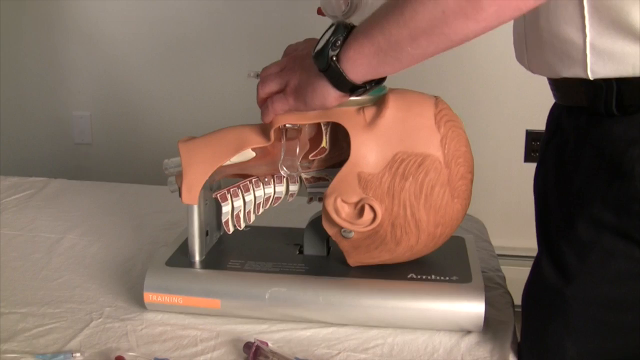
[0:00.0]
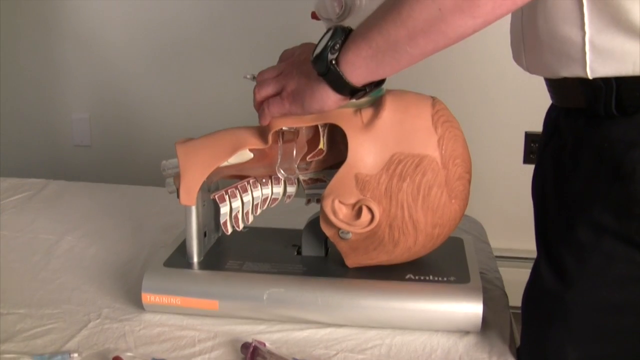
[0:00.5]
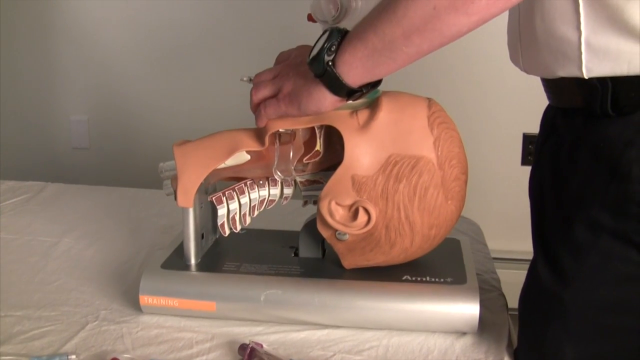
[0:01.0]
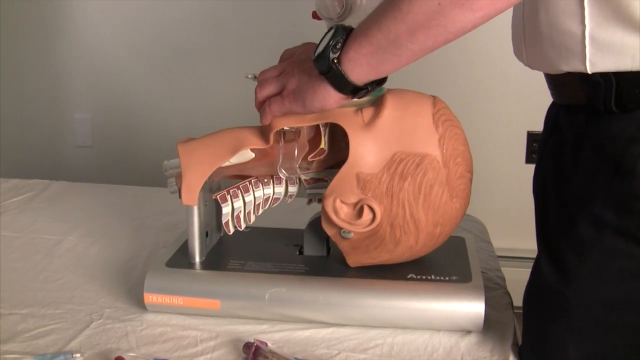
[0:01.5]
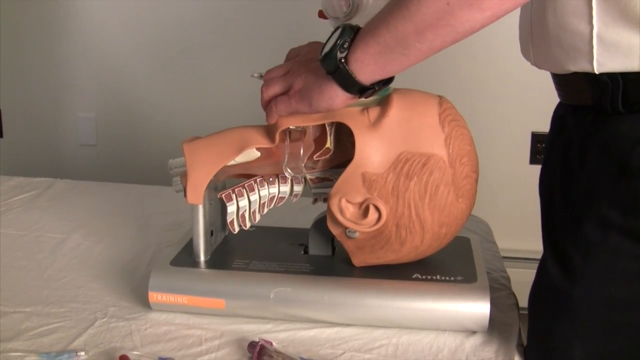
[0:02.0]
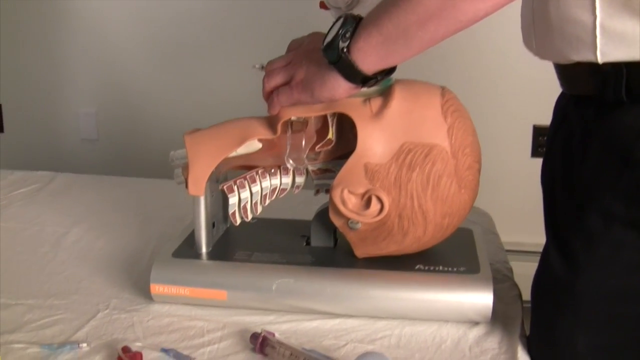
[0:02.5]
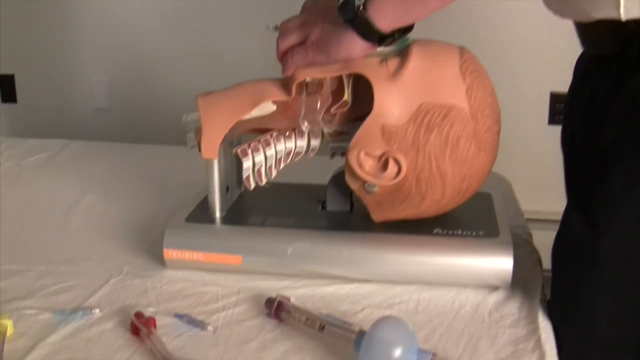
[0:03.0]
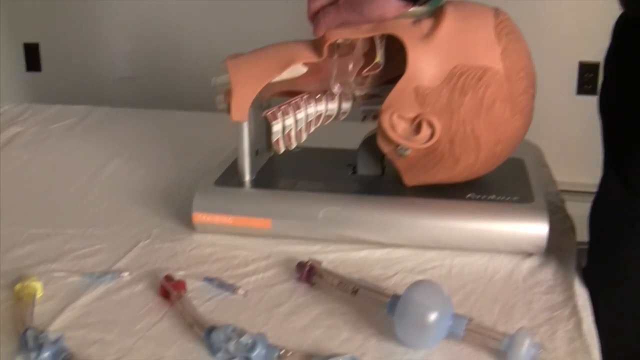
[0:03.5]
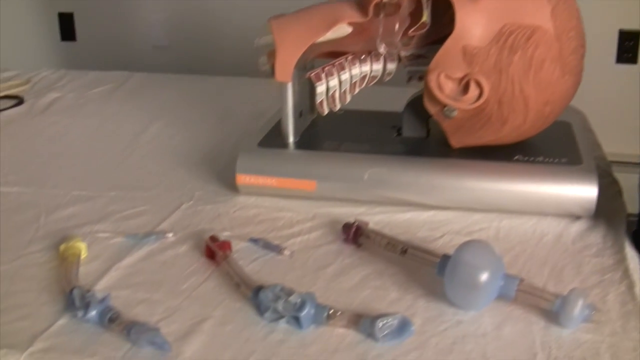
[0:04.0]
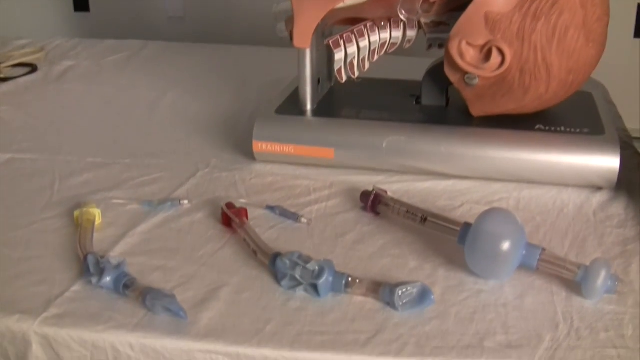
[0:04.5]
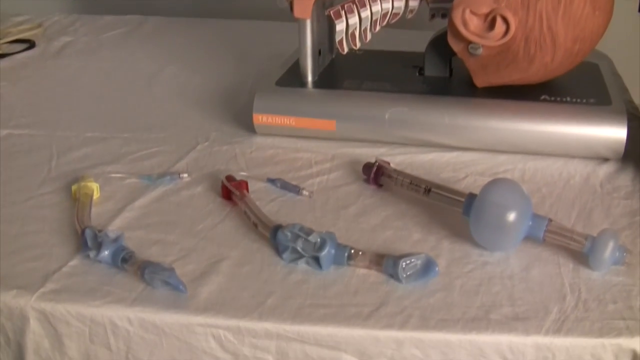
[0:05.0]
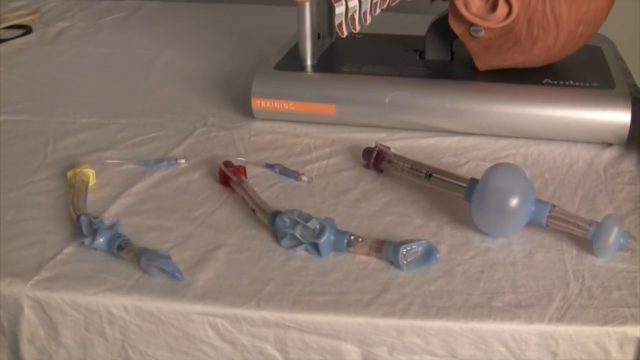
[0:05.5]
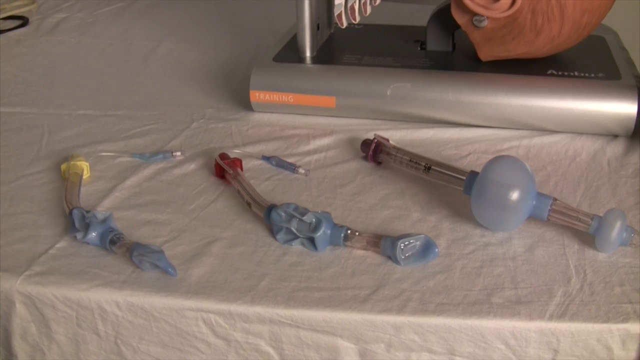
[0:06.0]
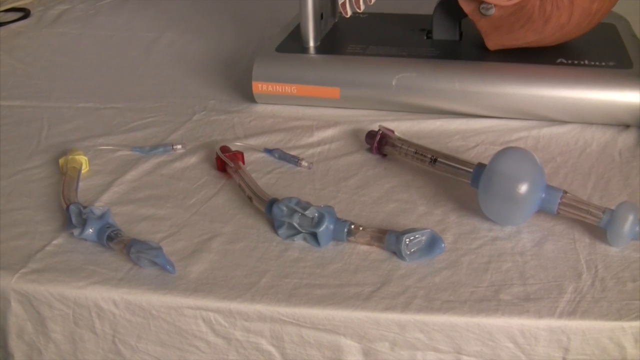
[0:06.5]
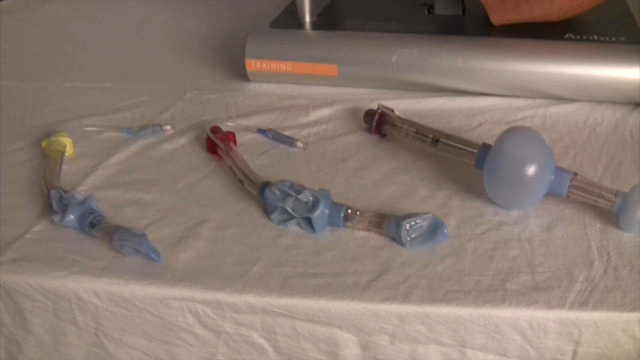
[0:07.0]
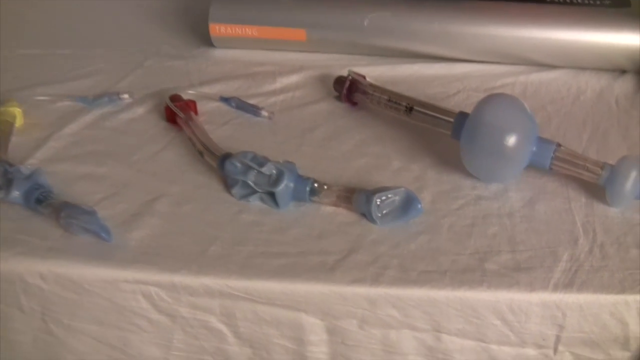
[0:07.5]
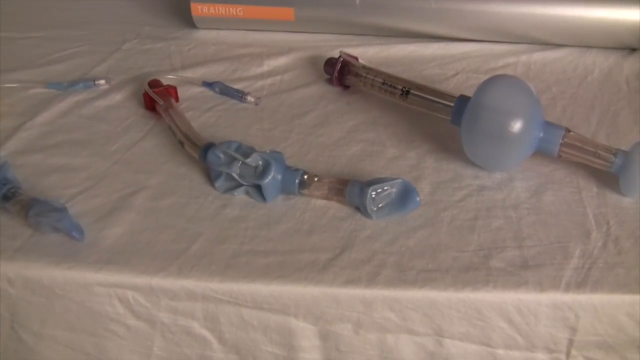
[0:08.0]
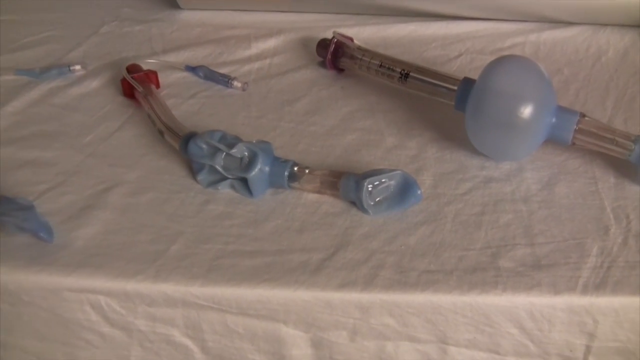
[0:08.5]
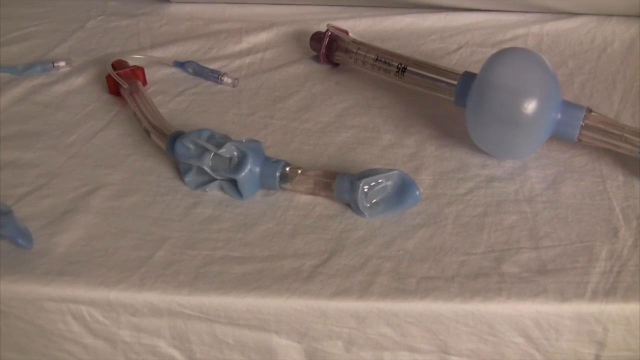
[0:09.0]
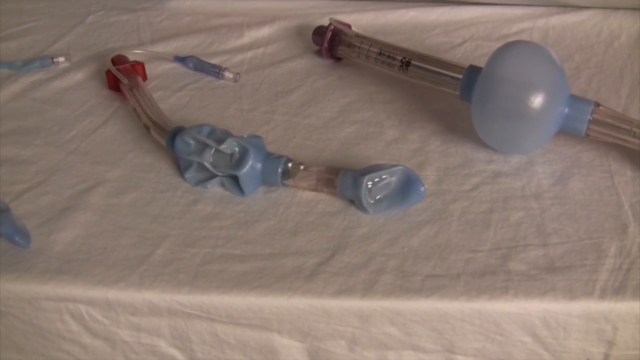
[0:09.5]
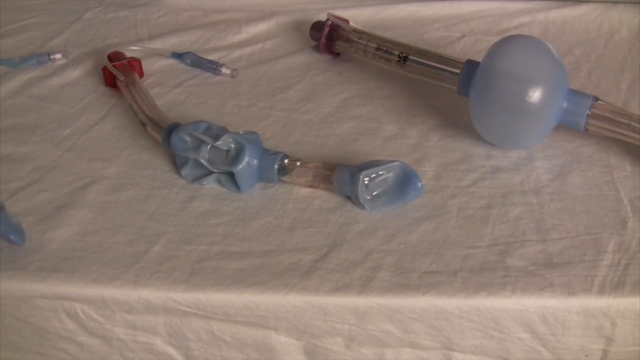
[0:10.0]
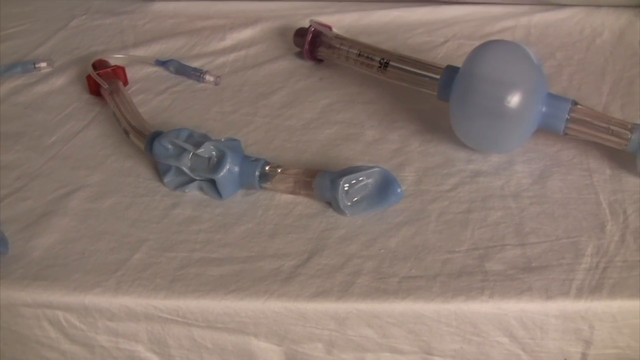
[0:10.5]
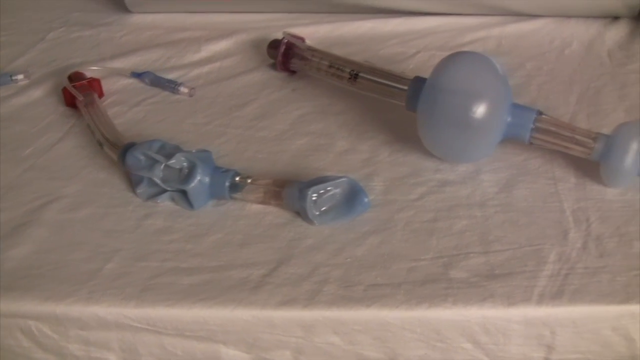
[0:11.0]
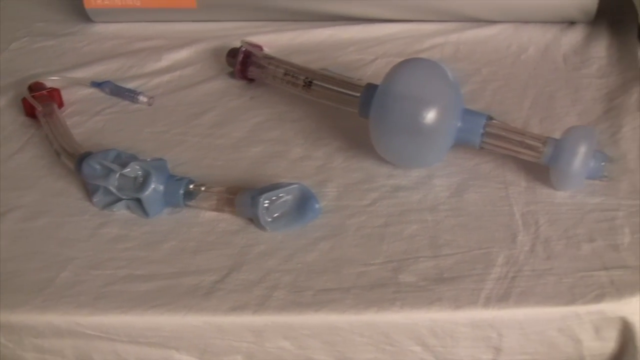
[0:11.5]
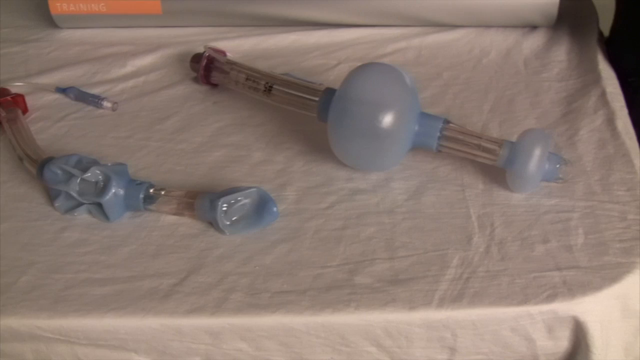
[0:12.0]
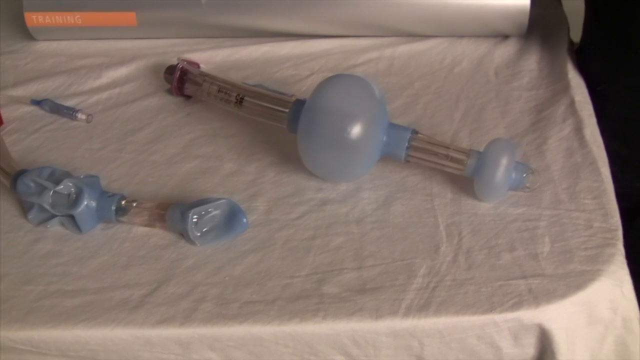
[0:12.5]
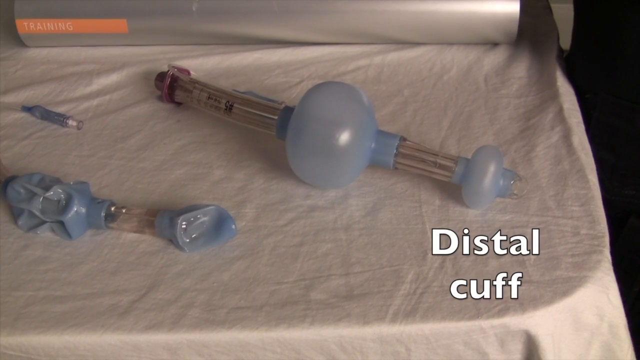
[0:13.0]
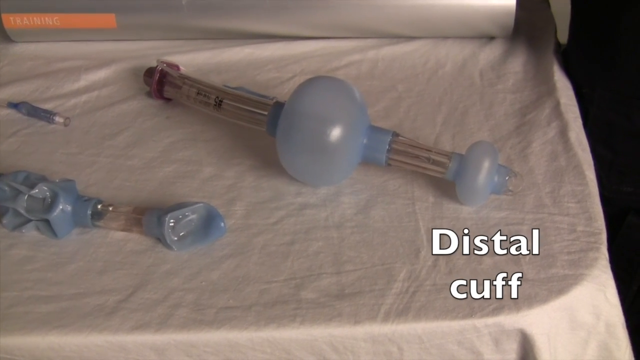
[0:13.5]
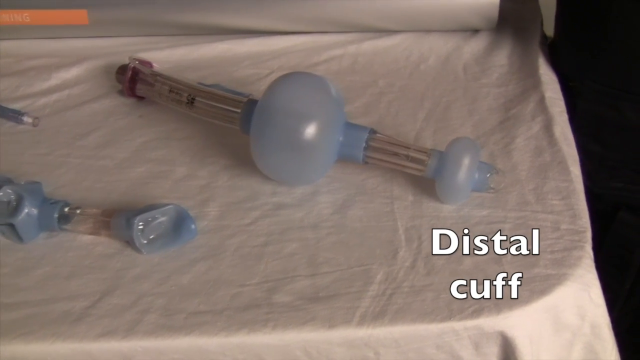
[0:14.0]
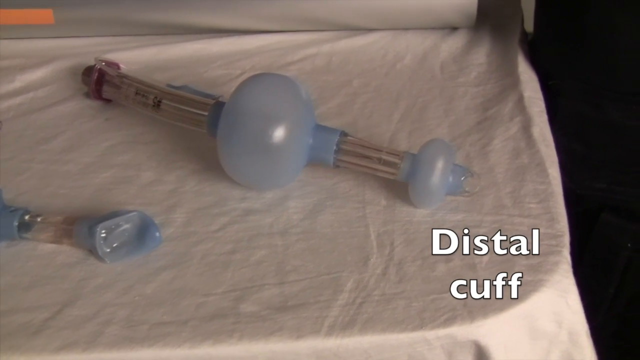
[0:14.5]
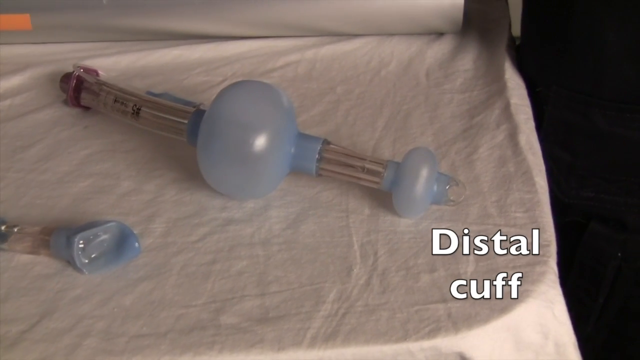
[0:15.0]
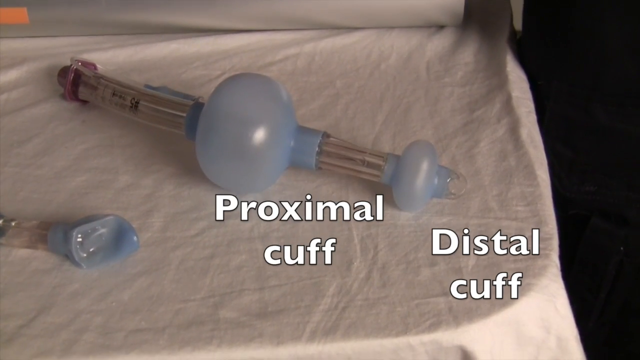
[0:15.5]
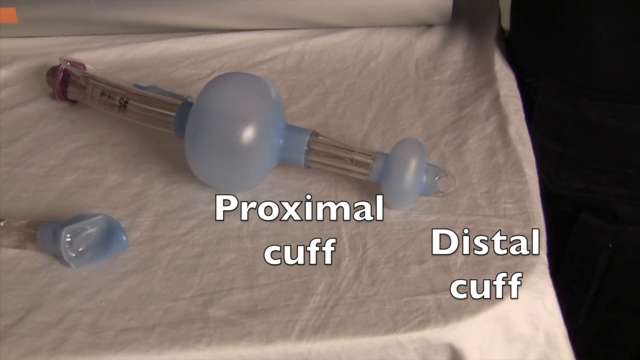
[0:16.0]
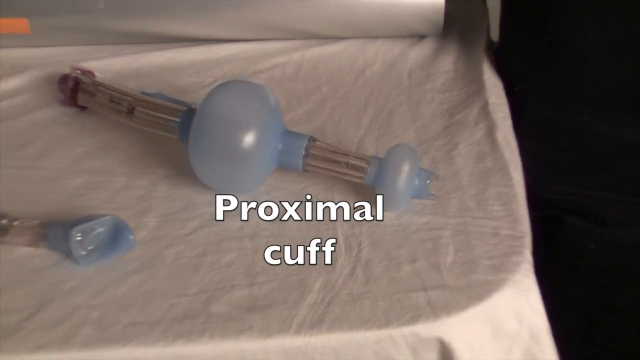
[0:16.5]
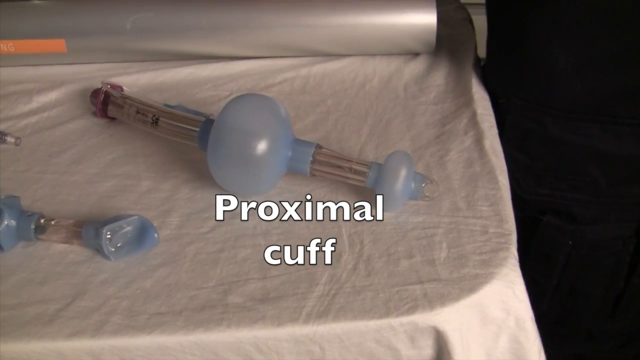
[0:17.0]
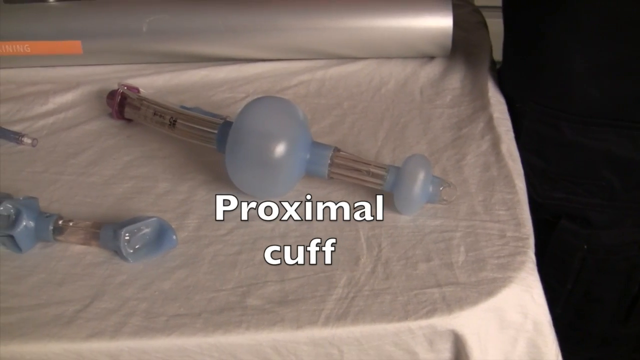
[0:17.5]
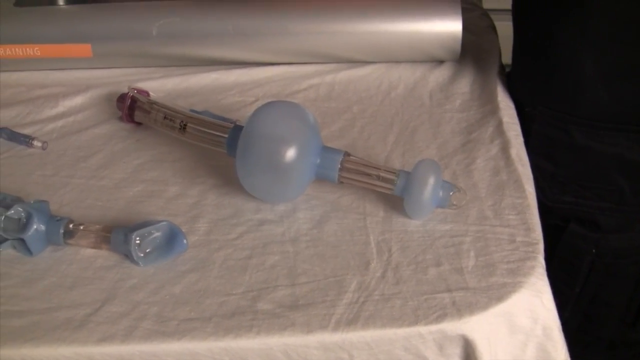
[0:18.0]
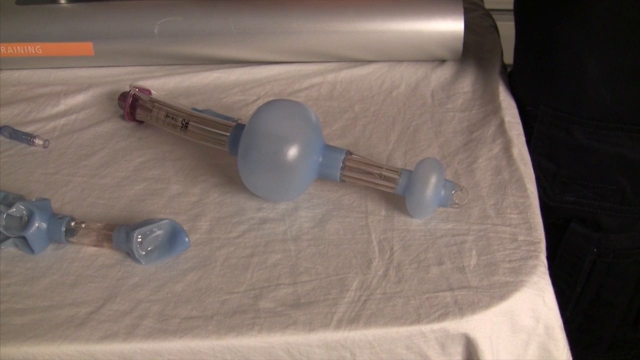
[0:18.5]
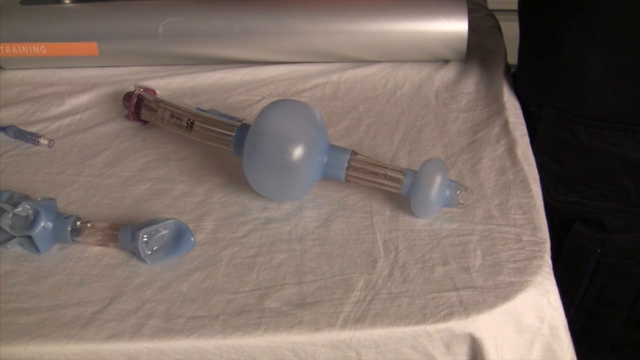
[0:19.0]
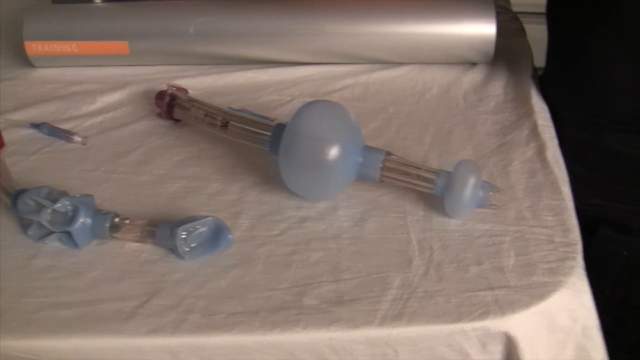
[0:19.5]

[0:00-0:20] A mannequin head, or a head that looks like a mannequin's, rests on a stand facing upwards, showing only the neck and above. The left cheek appears to have been cut out, revealing the spine, and there seems to be an opening where the mouth is. From the top right of the frame a left hand comes down and appears to hold something over the mouth of the dummy head. The head rests on what looks like a bed with a white sheet. The camera pans down, away from the head, toward the bottom left, revealing three tools. Each looks like a plastic tube leading into some sort of blue body, with another plastic tube coming out of that body and ending in a blue tip. One has a yellow tip, the one to its right has a red tip, and the one to the right of that looks ballooned up in the middle. The video zooms in on the middle tool, then pans over to the rightmost tool at the edge of the table. This tool looks like a plastic tube going into a bulbous, light blue body, with another plastic tube coming out of it and a blue tip. White text suddenly appears under this tool, reading "distal cuff", and white text under the bulbous middle body reads "proximal cuff". The text then disappears, and the video pans back to the left to the middle tool.